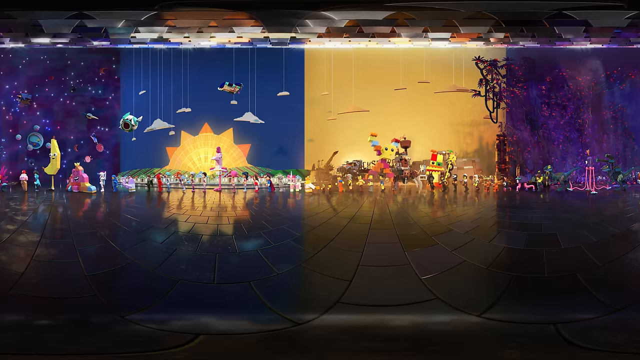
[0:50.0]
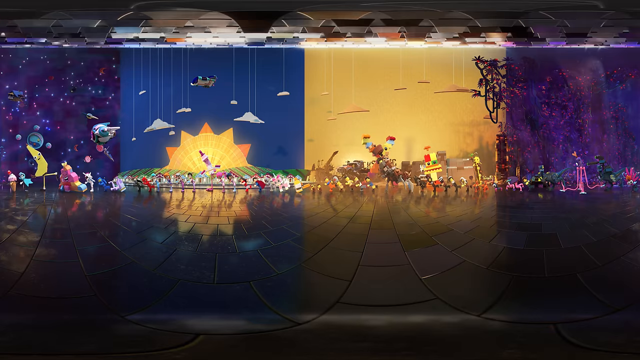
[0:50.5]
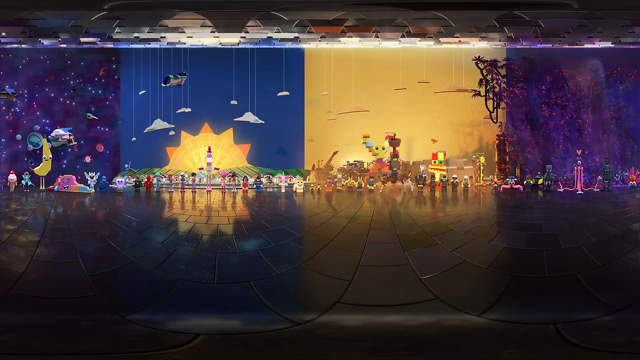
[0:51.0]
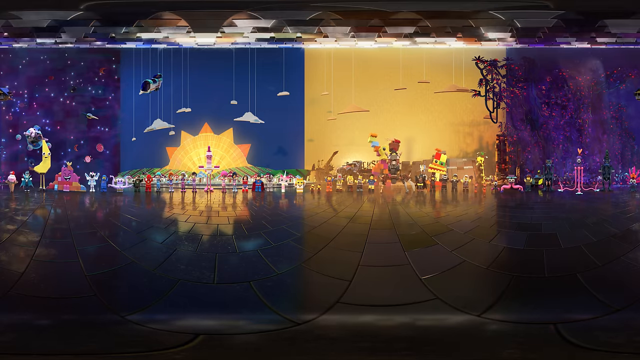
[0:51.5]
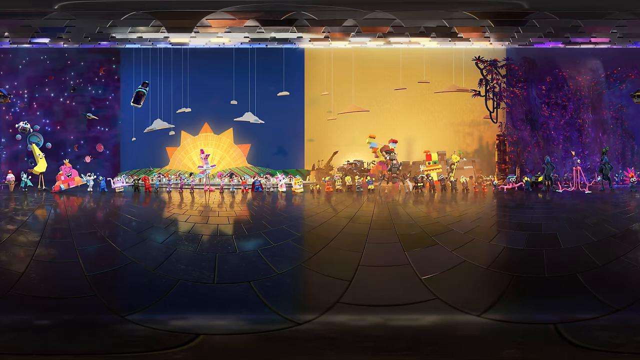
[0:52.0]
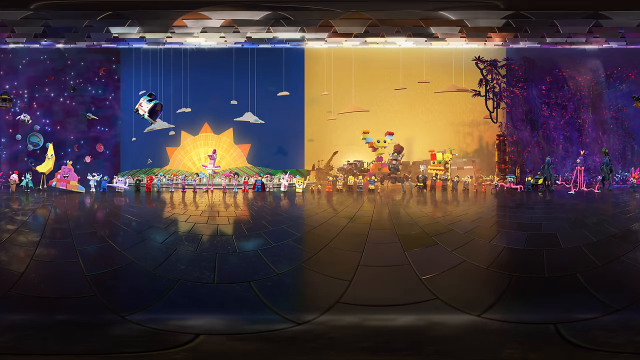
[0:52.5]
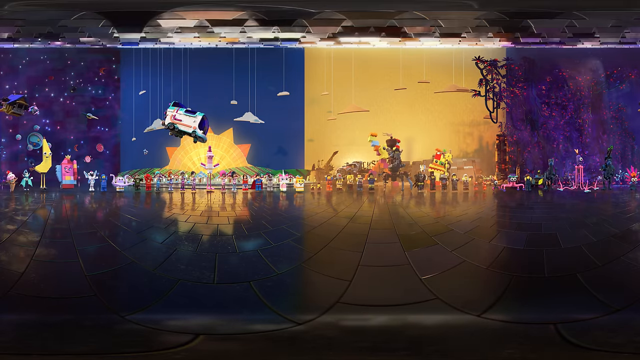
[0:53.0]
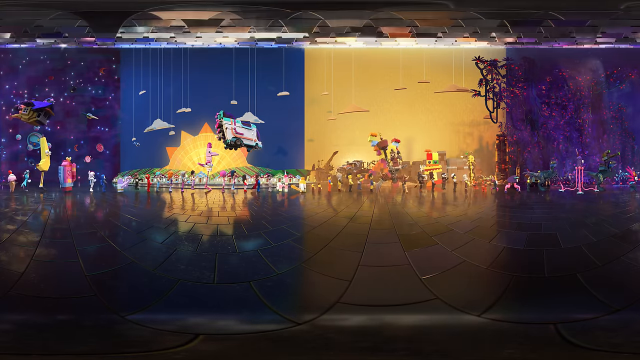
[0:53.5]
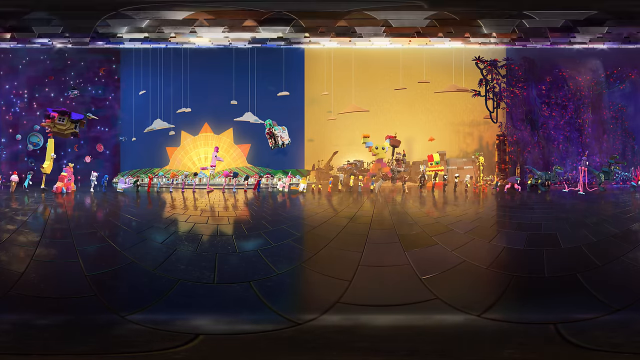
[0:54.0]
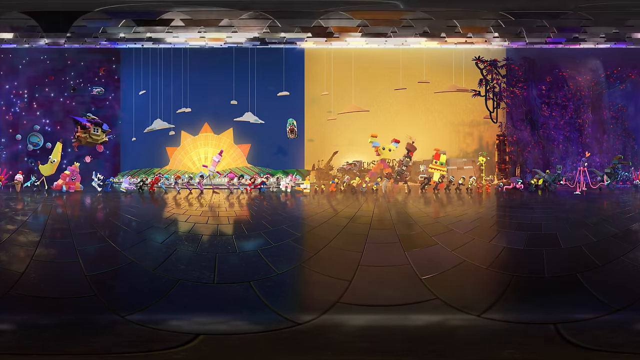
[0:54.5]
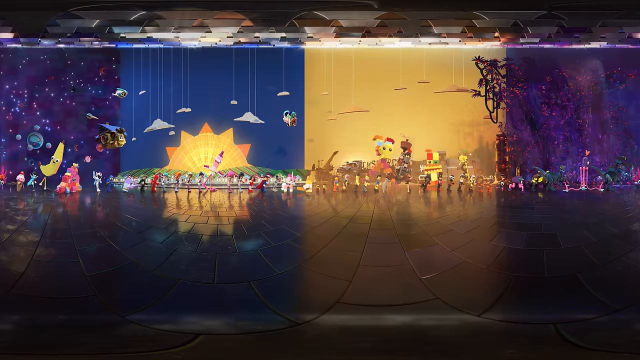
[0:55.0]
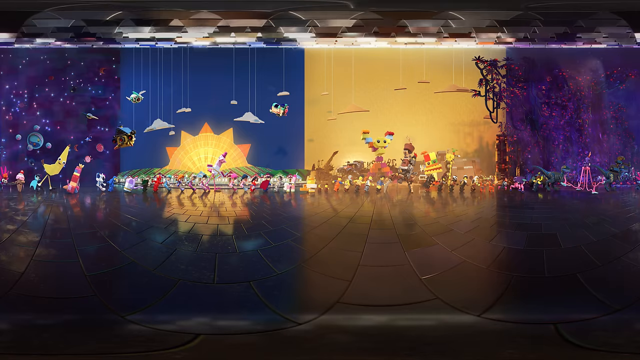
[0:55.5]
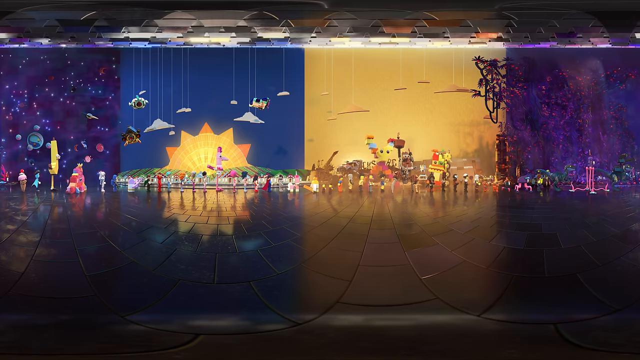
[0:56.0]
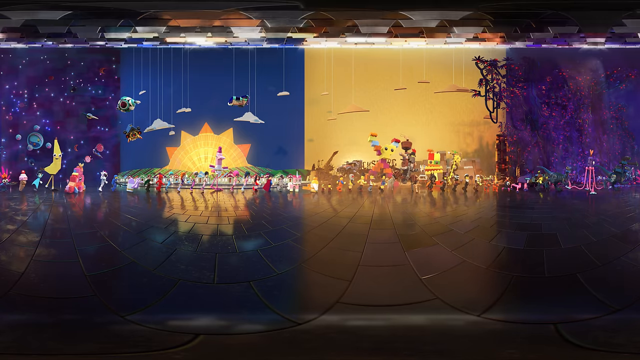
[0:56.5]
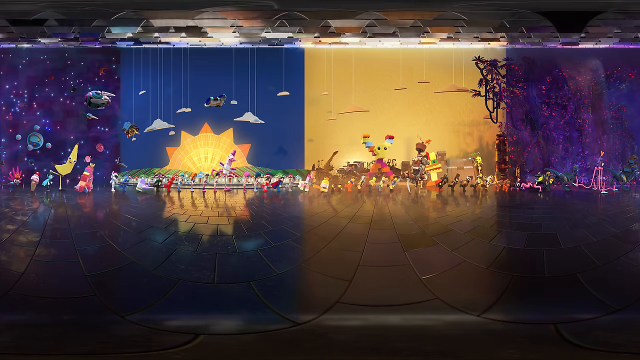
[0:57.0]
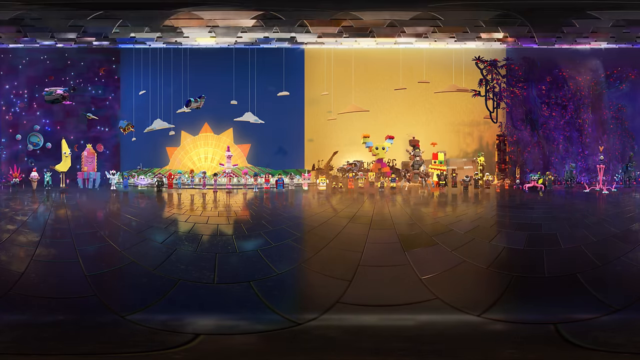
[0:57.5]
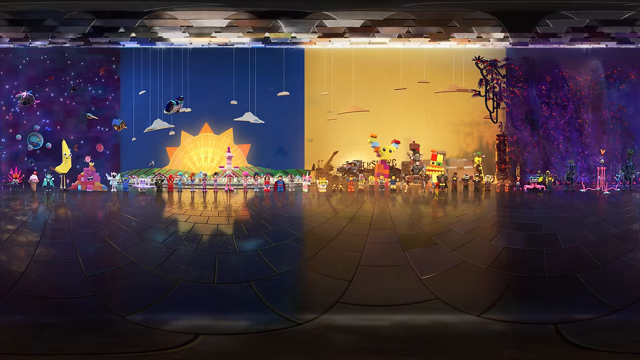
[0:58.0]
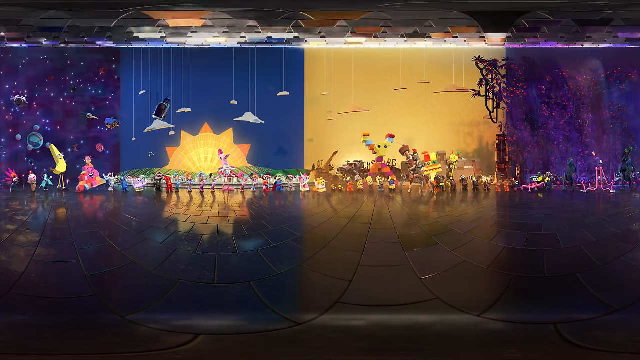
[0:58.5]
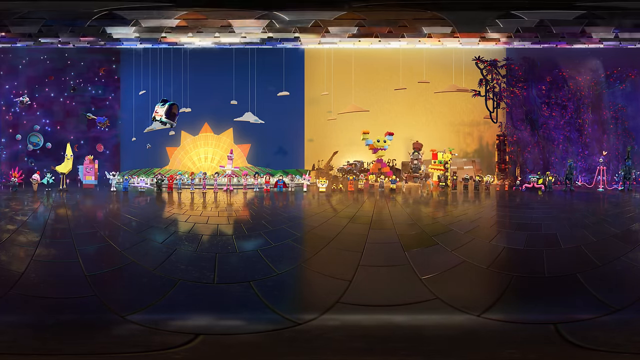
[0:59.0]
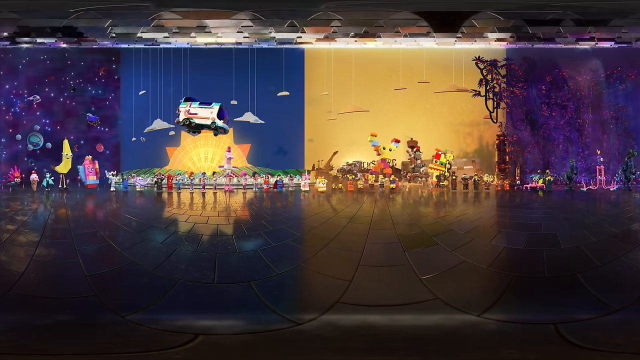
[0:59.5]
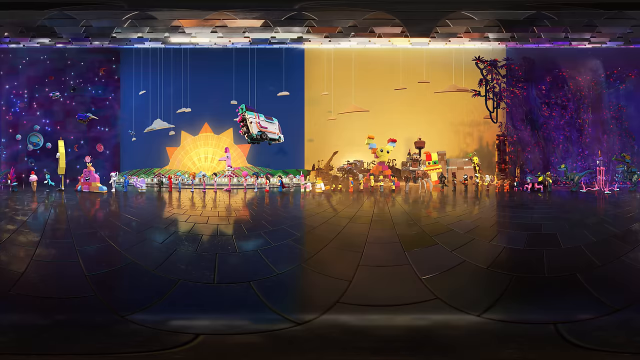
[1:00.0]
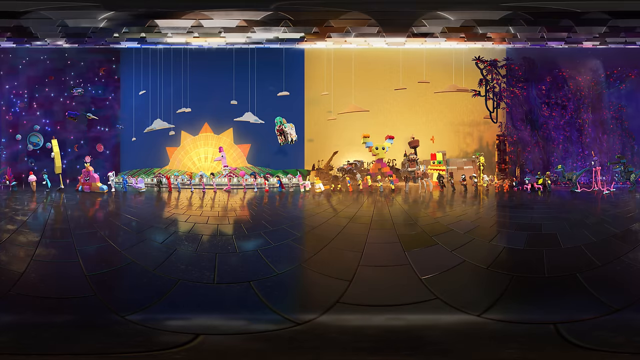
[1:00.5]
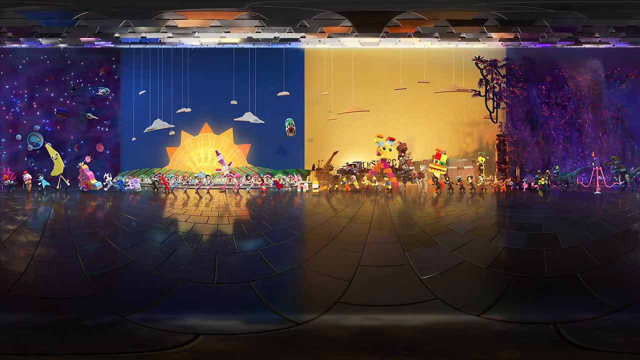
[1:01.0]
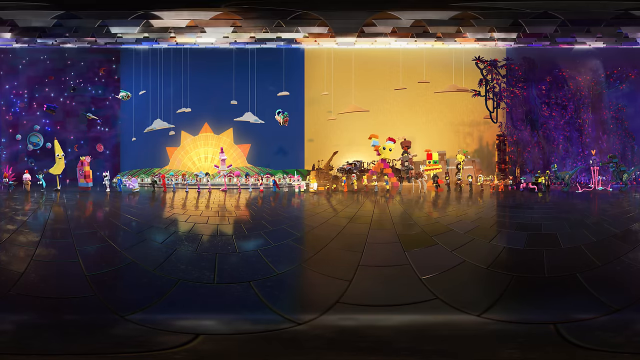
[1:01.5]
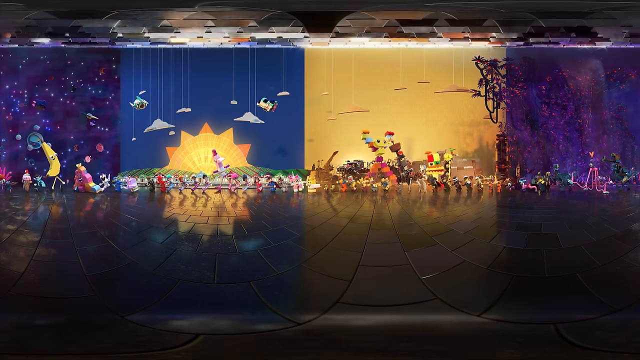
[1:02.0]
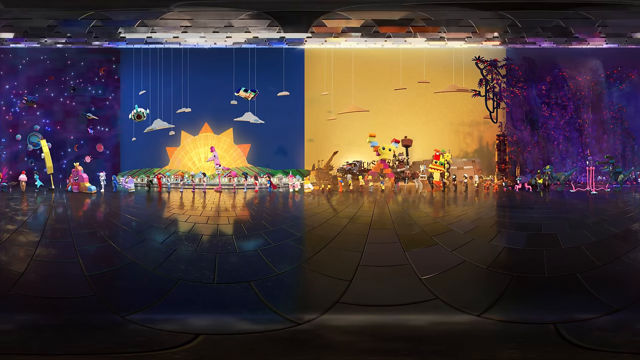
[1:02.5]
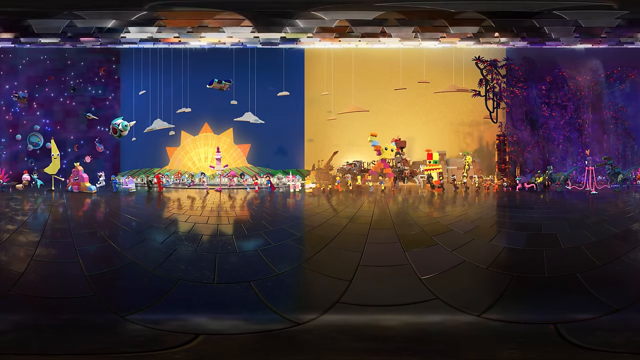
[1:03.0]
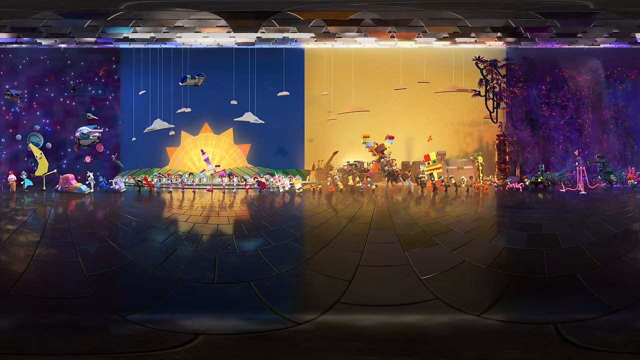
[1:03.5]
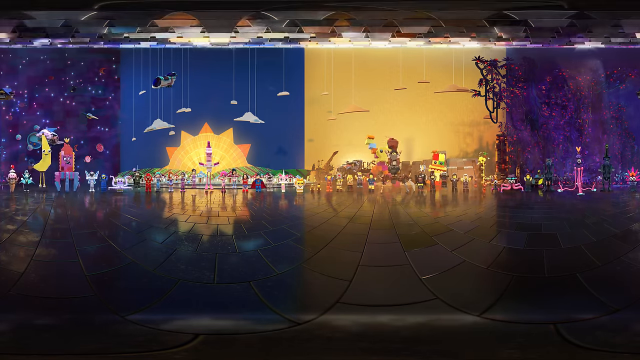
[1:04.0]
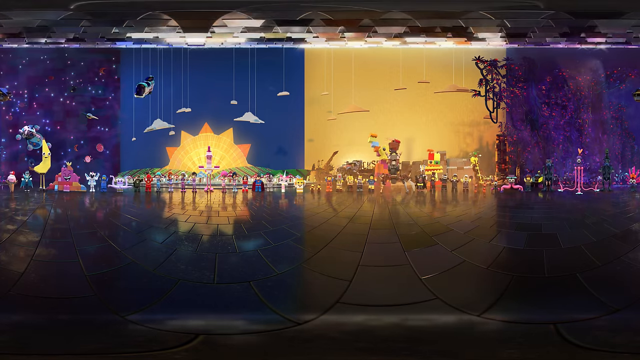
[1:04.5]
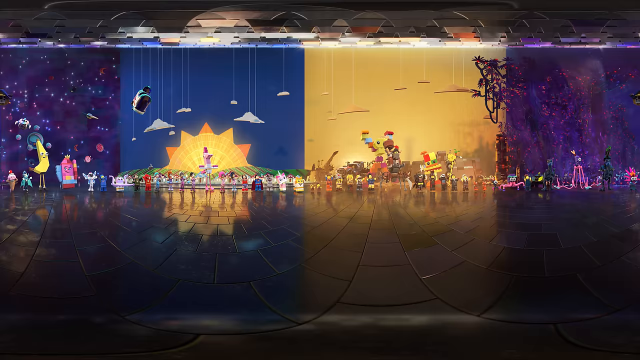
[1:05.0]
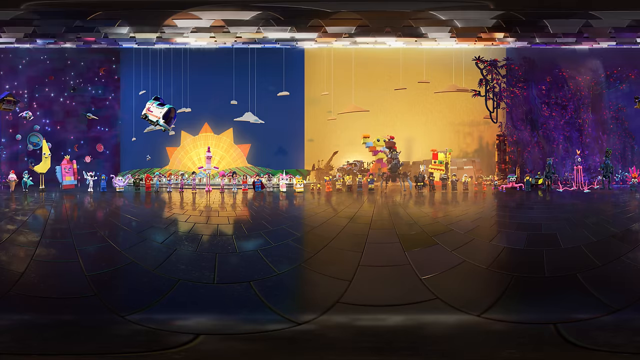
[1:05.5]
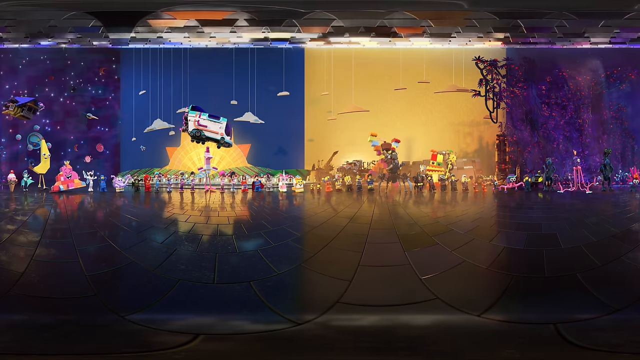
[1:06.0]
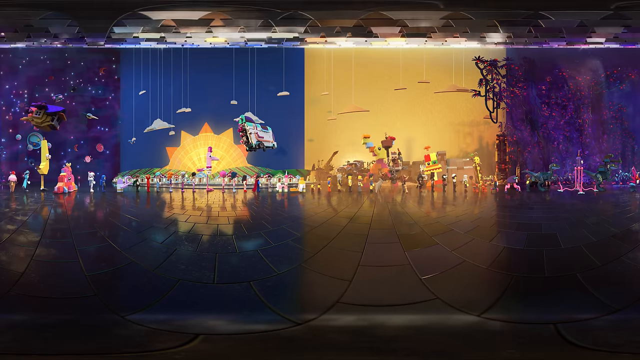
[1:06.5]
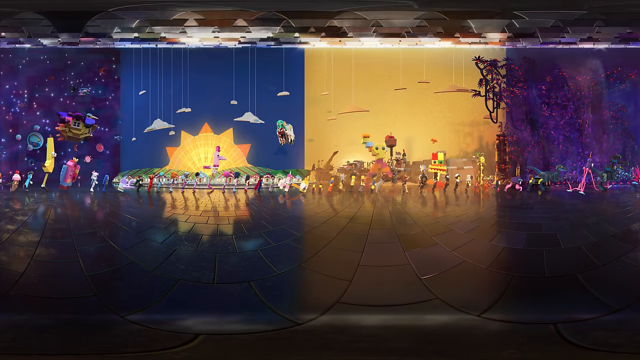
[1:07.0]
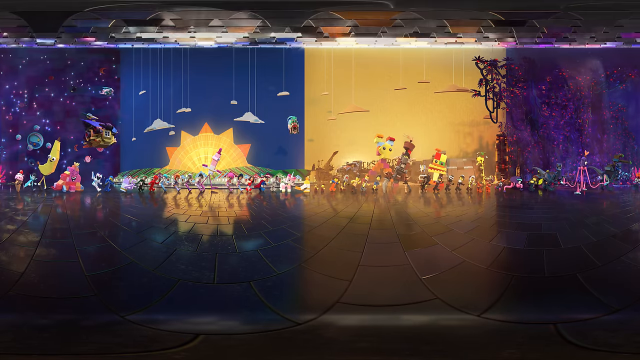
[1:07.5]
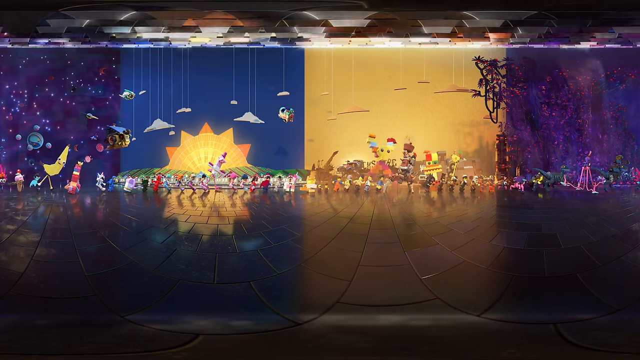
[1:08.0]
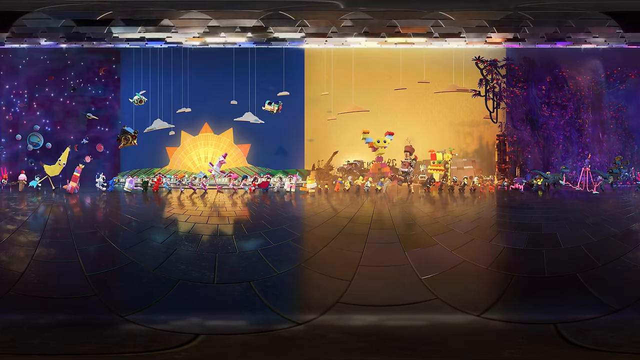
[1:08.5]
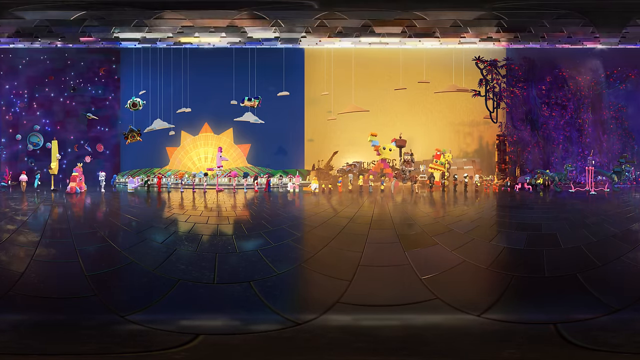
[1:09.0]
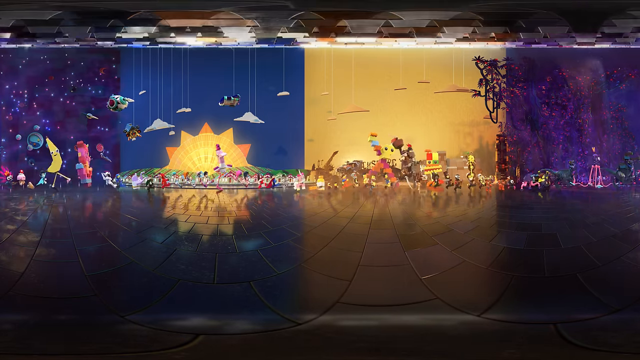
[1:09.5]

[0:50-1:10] The figurines continue to dance, with about 14 small figurines still in the line, along with the larger four-legged figurine. Behind them is a big figurine made up of a bunch of colorful blocks, with a yellow face and two big black eyes. There is also some sort of figurine, maybe a car or something, bobbing in the back. The flying figurine still comes through at the top left corner.